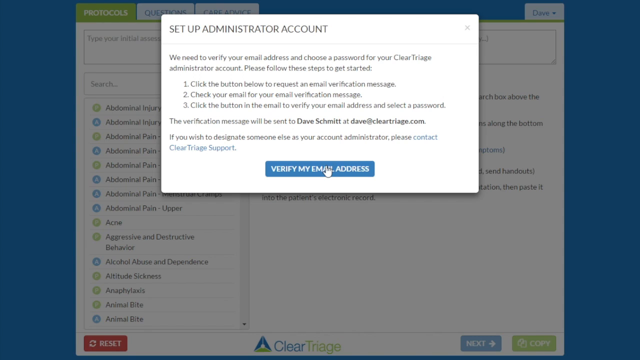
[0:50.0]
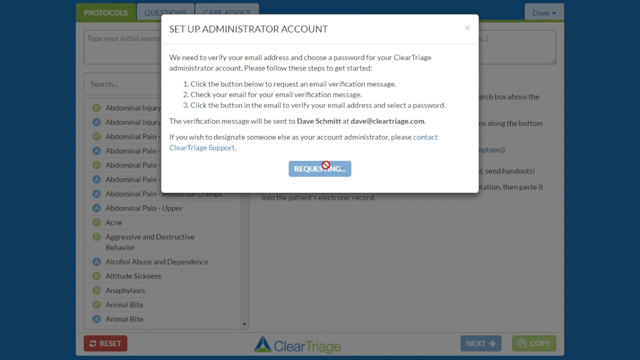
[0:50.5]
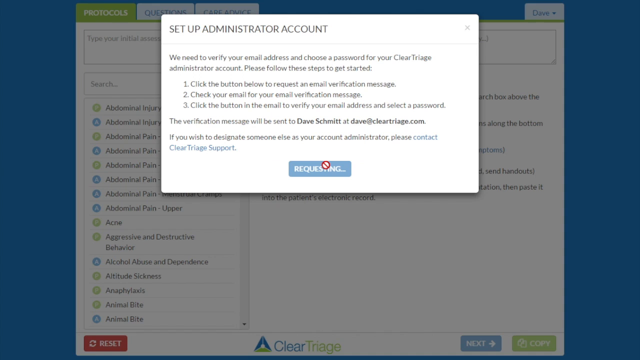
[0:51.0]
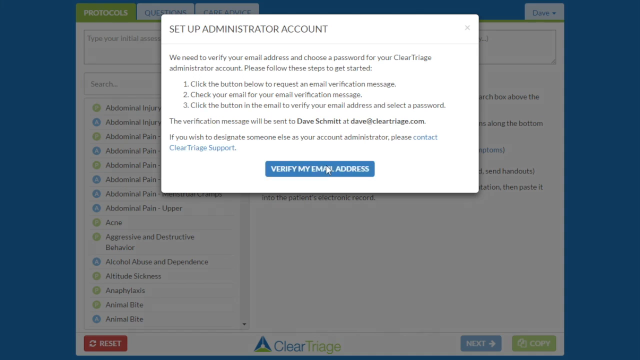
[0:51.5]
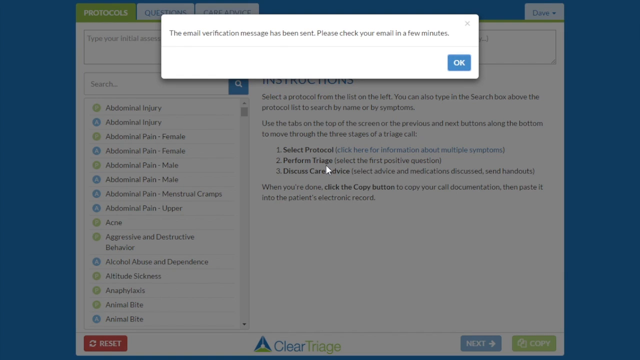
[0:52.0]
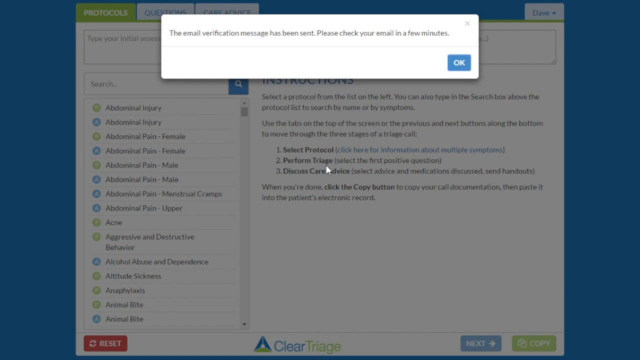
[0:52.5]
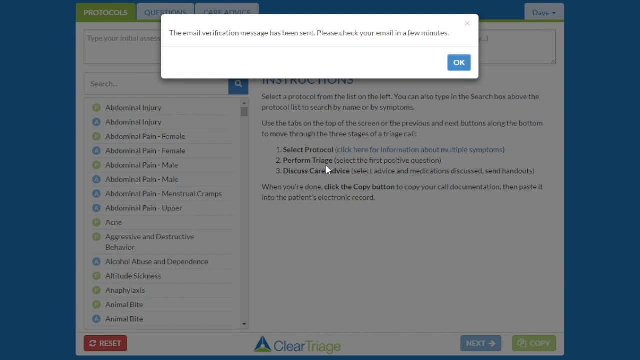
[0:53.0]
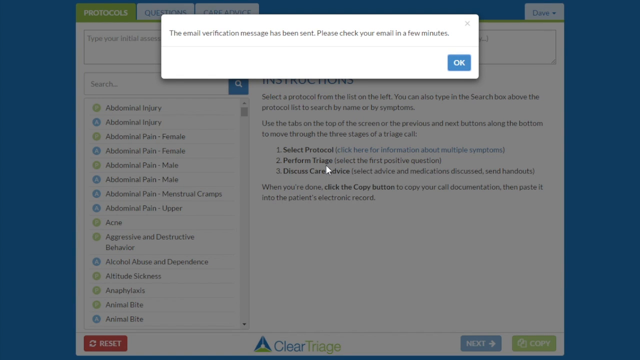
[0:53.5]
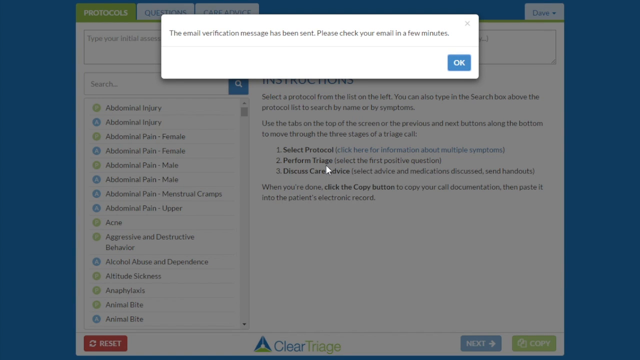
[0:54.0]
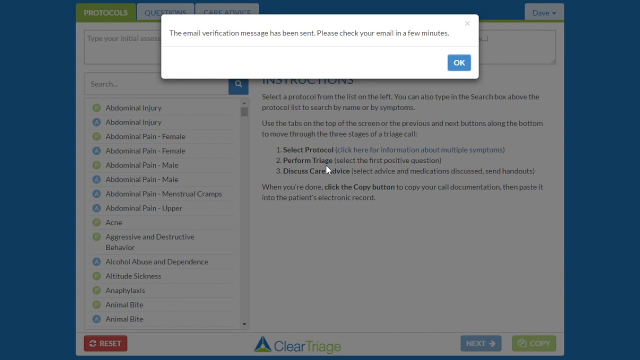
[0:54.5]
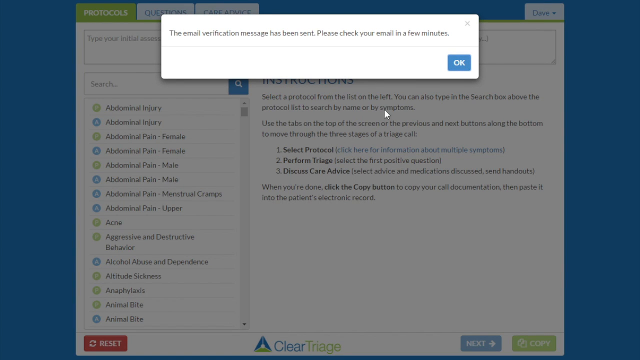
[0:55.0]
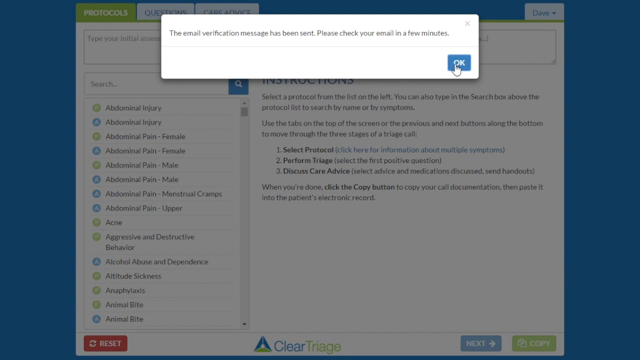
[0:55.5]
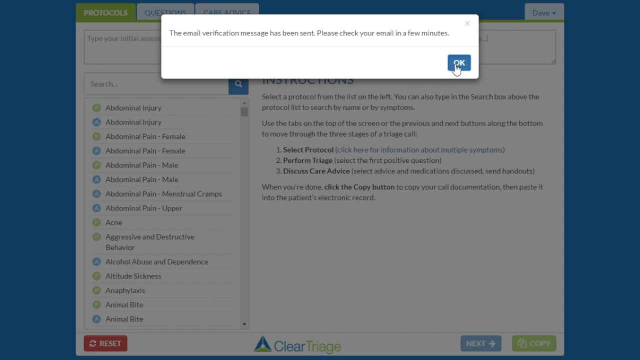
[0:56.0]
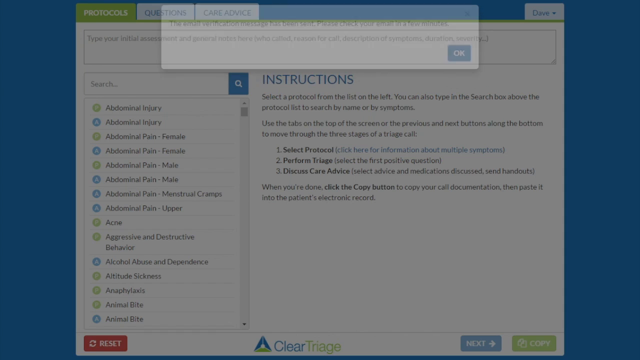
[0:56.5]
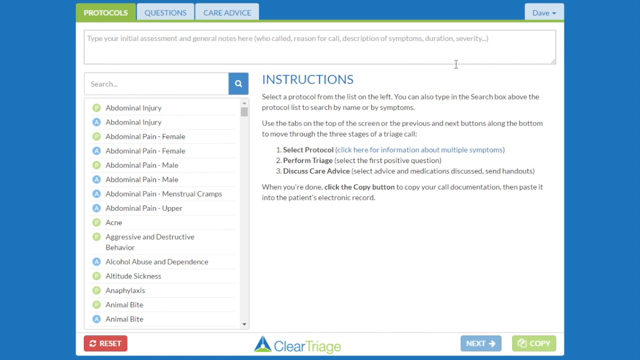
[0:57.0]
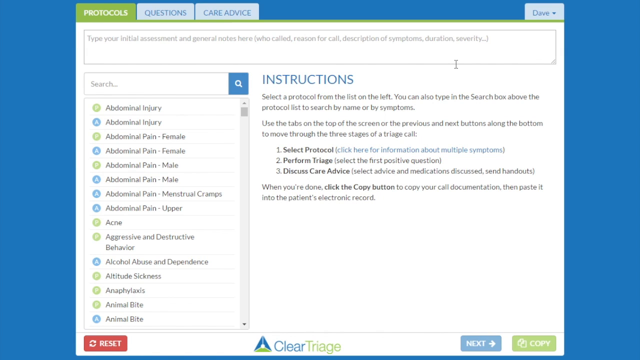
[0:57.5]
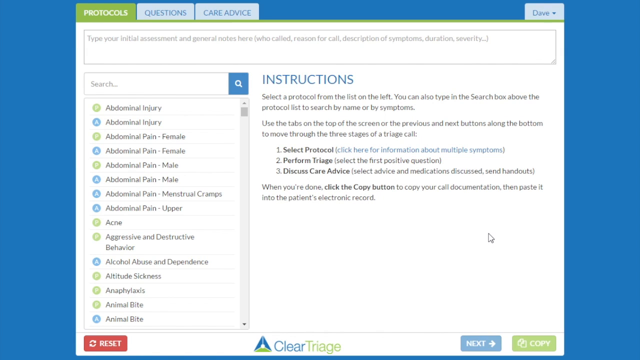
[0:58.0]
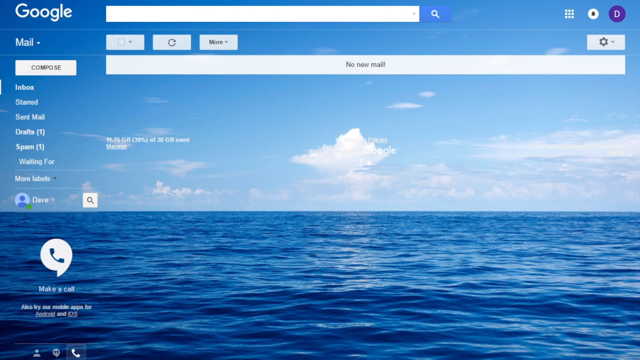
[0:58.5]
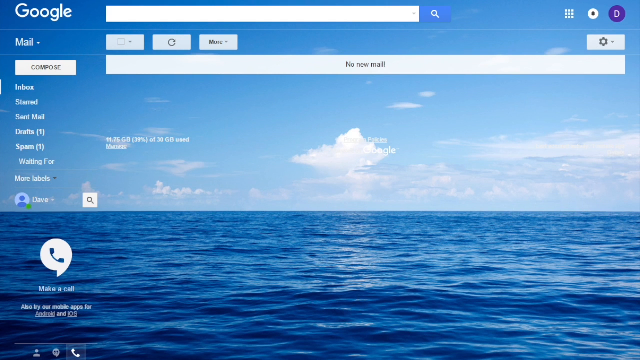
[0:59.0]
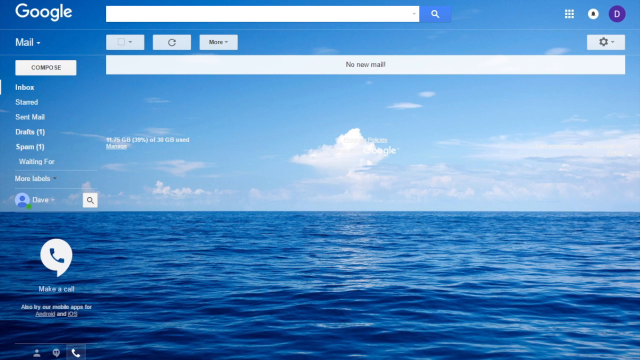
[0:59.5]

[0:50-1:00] After the verify my email address button is clicked to send a message to Dave Schmidt at dave@cleartriage.com, a message replaces the button. A message then pops up reading "the email verification message has been sent. Please check your email in a few minutes." A blue "OK" button is at the bottom right, and the mouse clicks it. The screen then opens a Google page with a blue sea and blue sky background, which appears to be Dave's Google Mail page.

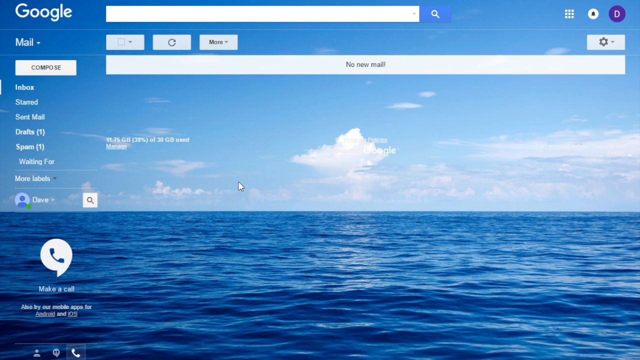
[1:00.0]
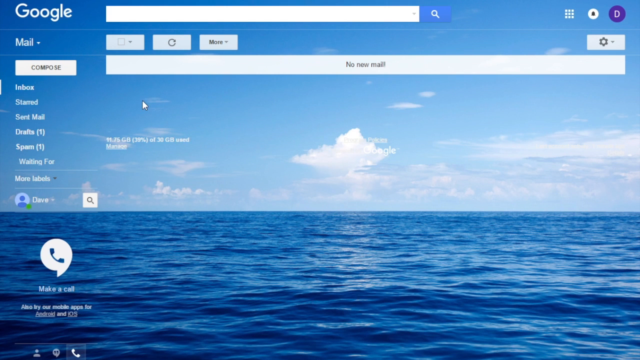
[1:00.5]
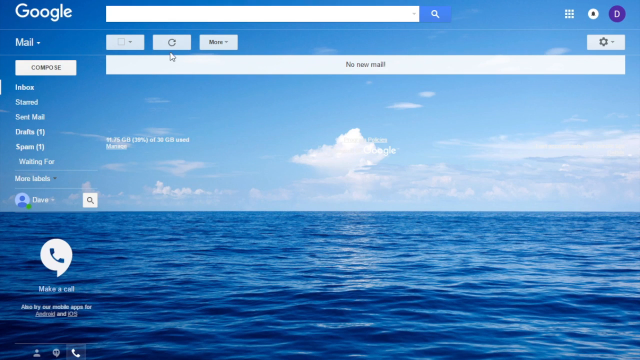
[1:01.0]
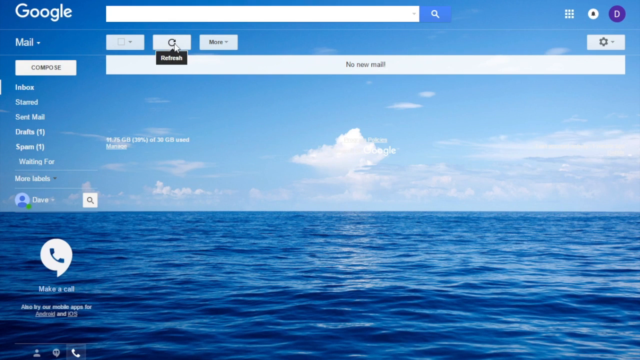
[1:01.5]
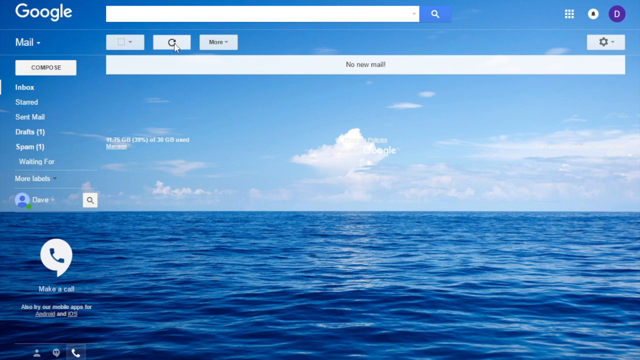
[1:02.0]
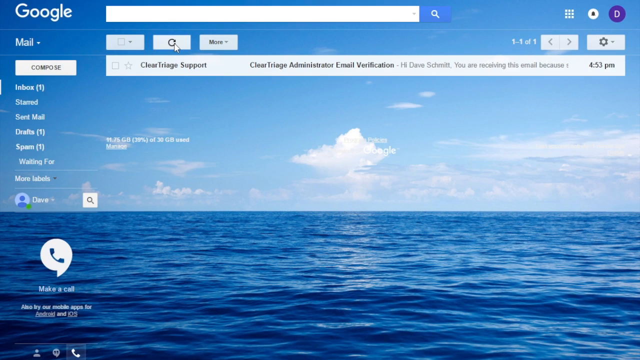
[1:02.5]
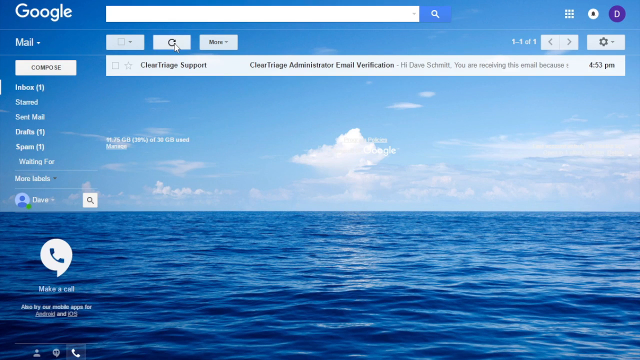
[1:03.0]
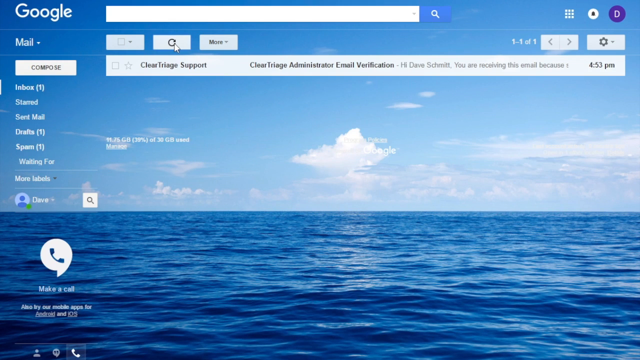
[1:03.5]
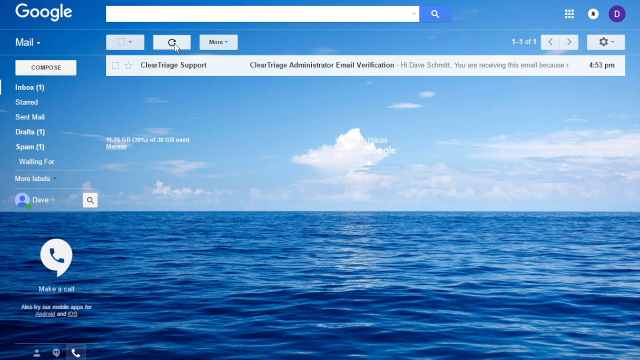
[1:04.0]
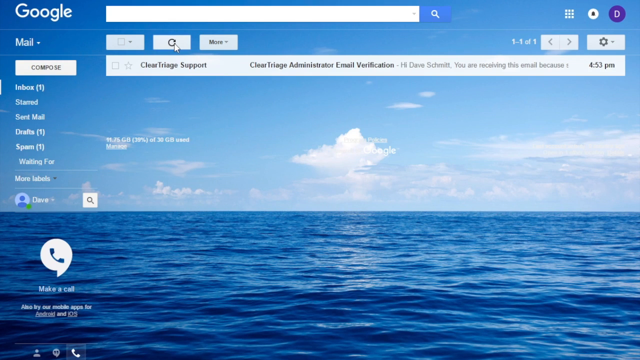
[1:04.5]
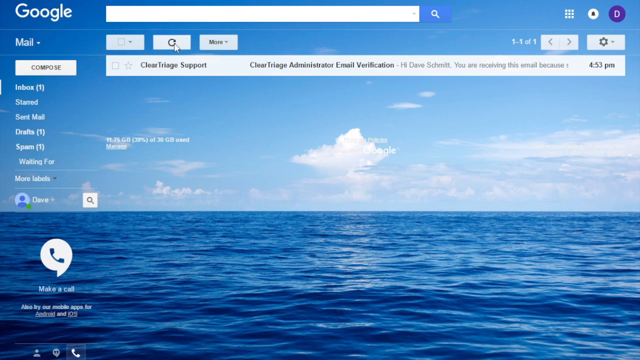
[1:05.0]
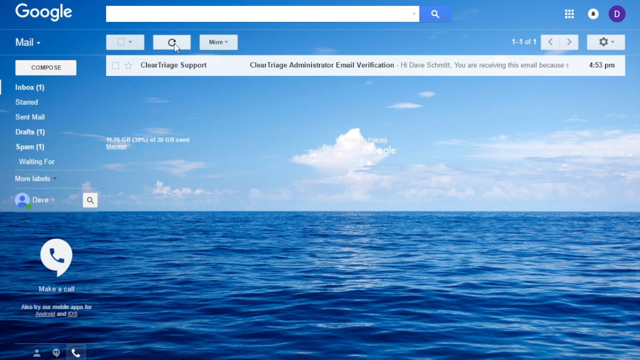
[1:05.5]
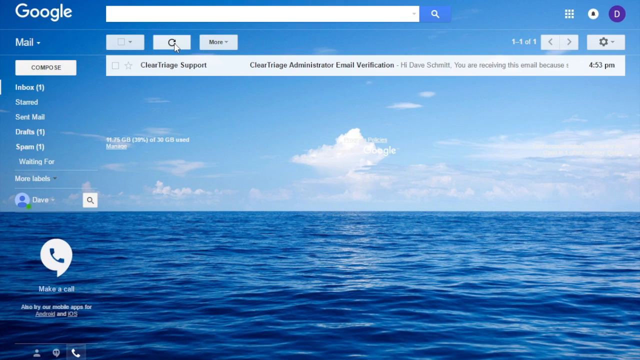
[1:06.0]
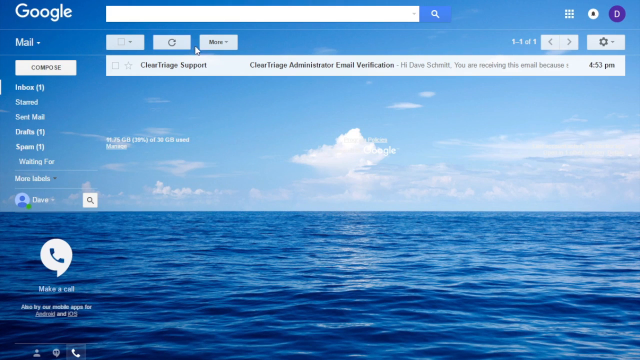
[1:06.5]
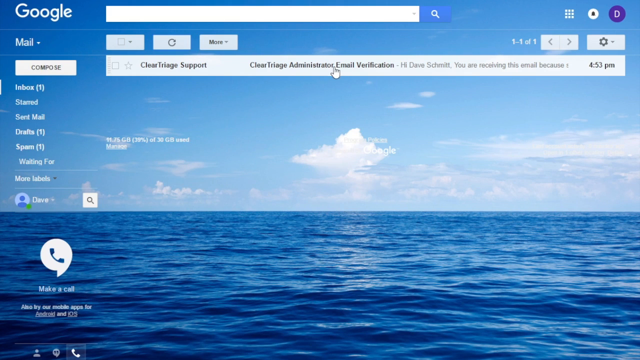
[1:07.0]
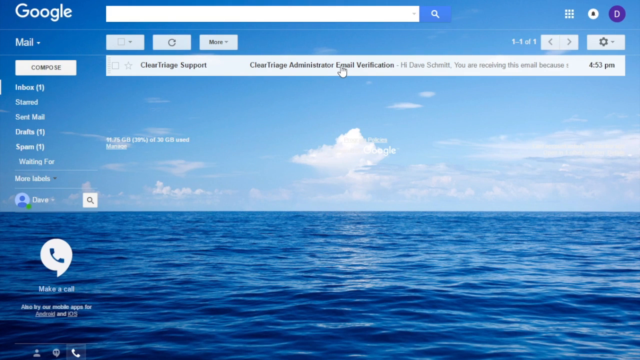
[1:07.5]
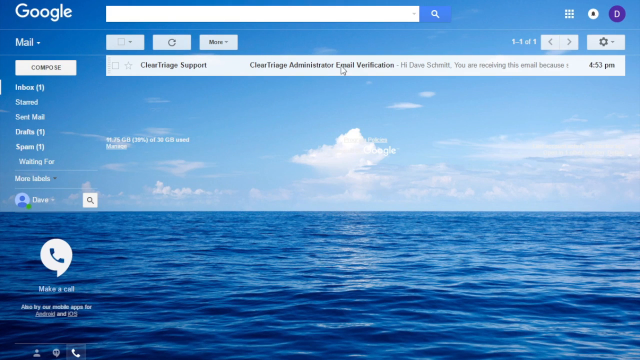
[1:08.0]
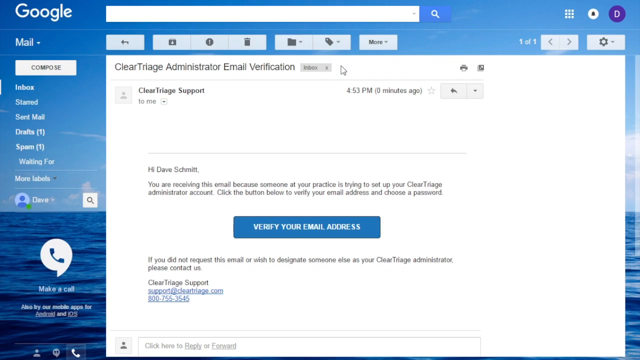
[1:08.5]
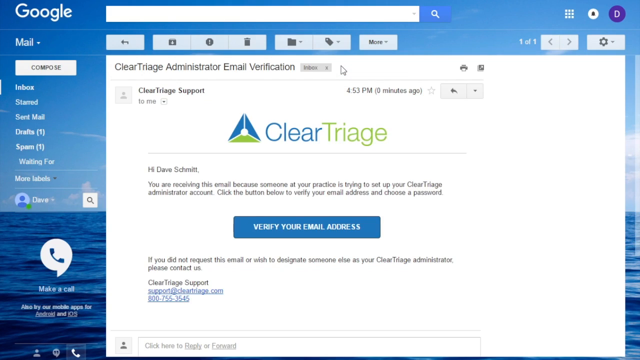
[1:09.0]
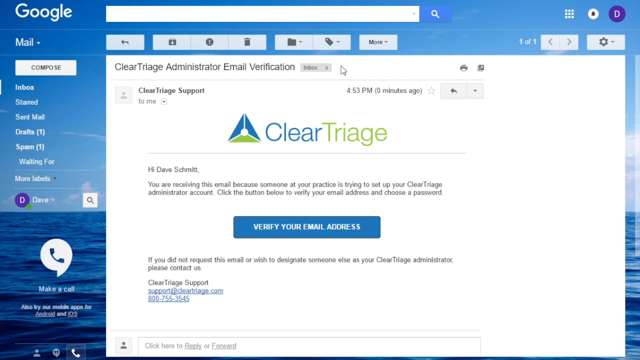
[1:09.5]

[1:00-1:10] Dave Schmidt's Google Mail page is shown with a blue sea and sky horizon background and white fluffy clouds in the sky. The mouse moves to the refresh button at the top left of the page and clicks it. The inbox refreshes to show an email from Clear Triage Support titled Clear Triage Administrator email verification. The mouse clicks the email and it opens, showing the Clear Triage logo at the top, a triangle in blue and green. The email reads "hi Dave Schmidt you're receiving this email because someone at your practice is trying to set up your clear triage administrator account. Click the button below to verify your email address and choose a password." A blue "verify your email address" button is at the bottom of the email.